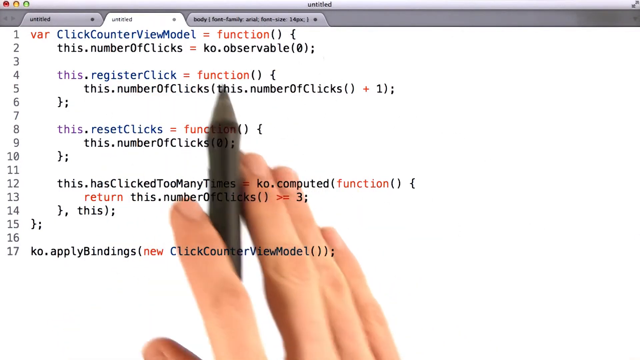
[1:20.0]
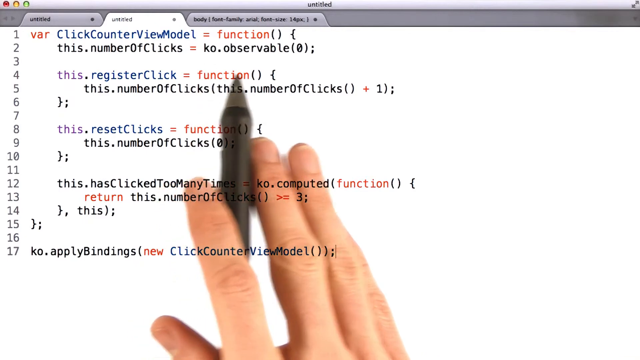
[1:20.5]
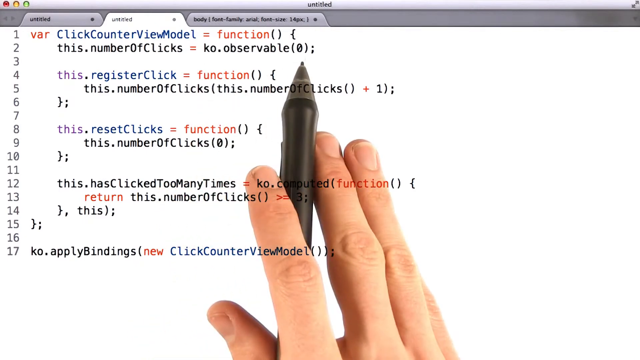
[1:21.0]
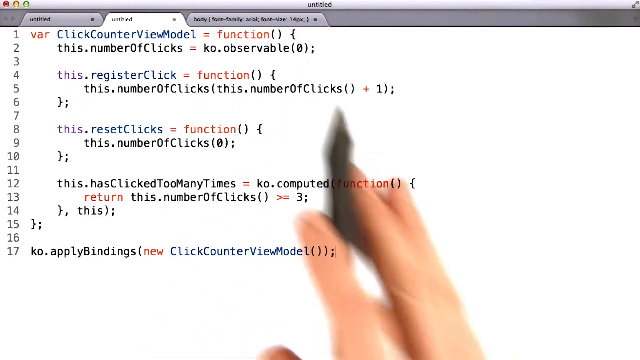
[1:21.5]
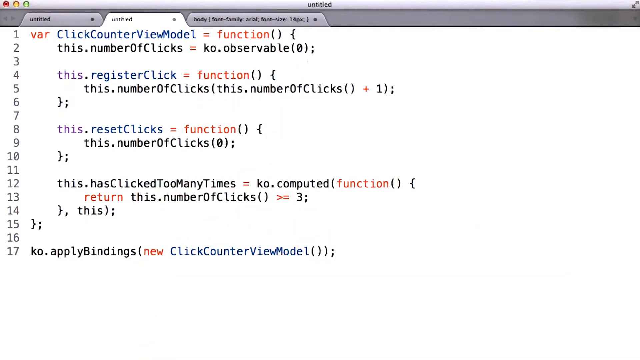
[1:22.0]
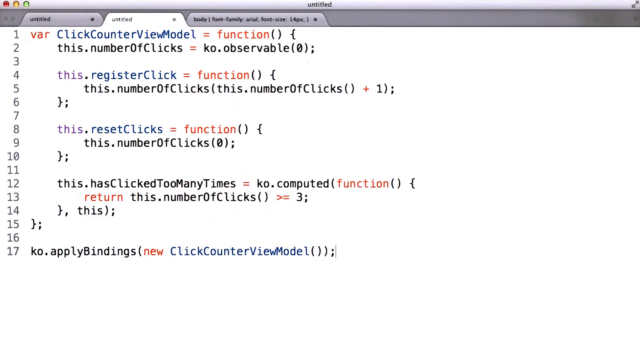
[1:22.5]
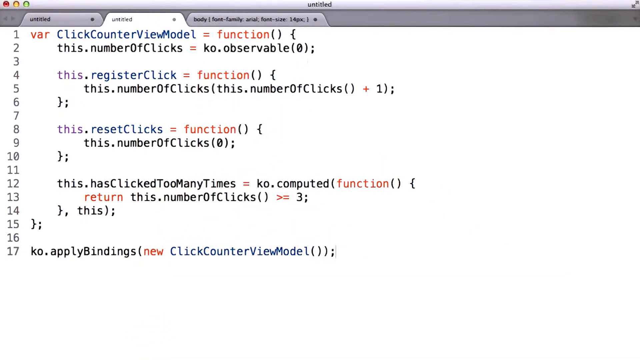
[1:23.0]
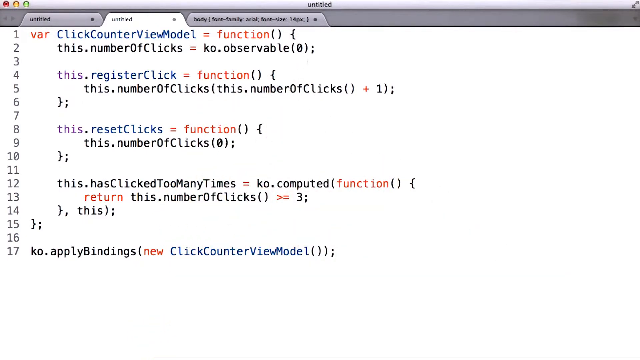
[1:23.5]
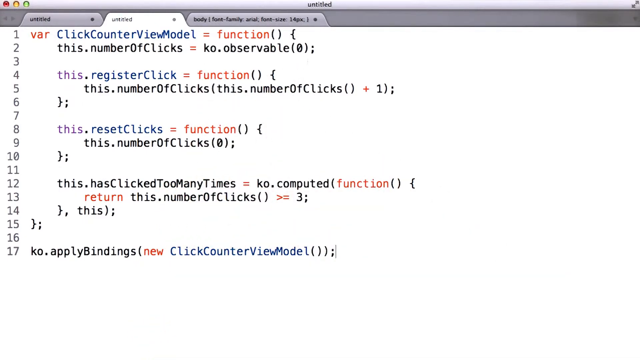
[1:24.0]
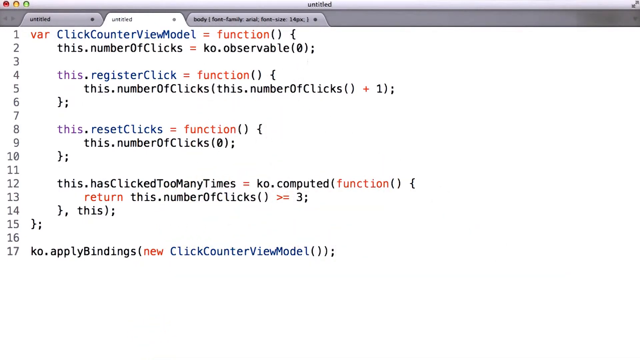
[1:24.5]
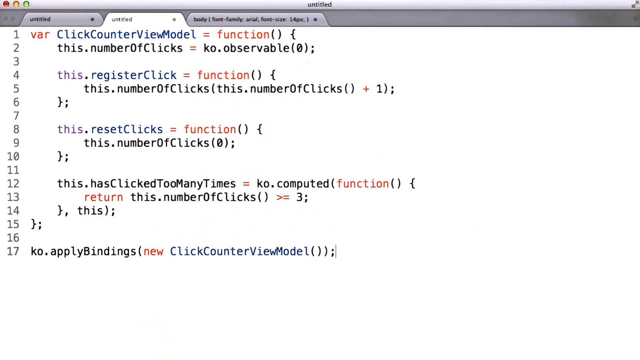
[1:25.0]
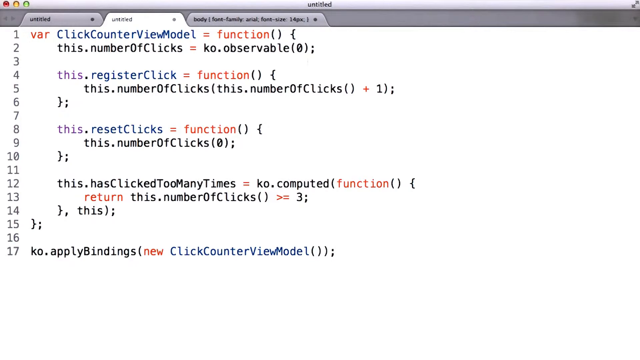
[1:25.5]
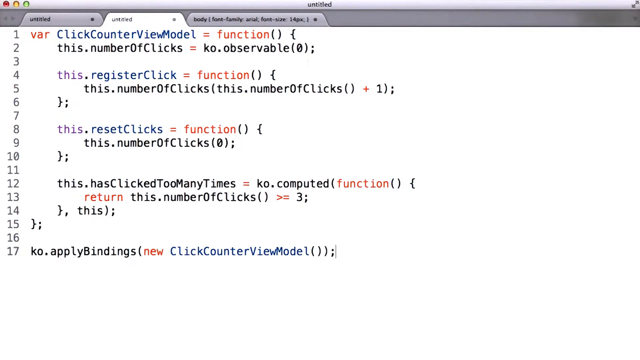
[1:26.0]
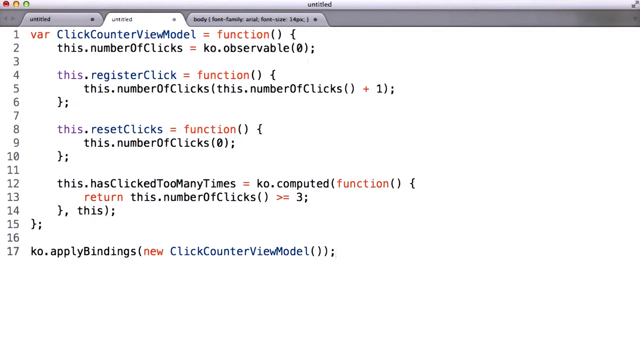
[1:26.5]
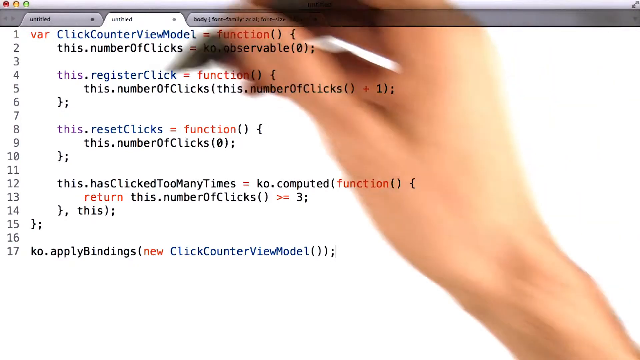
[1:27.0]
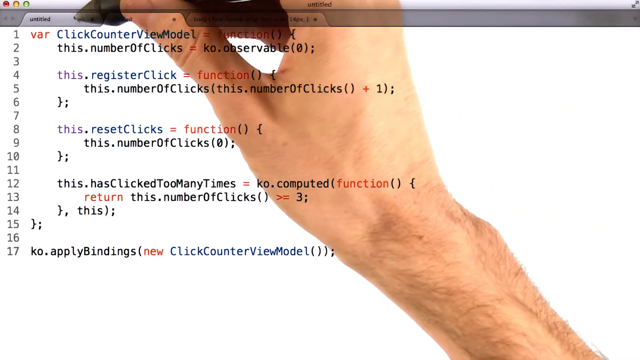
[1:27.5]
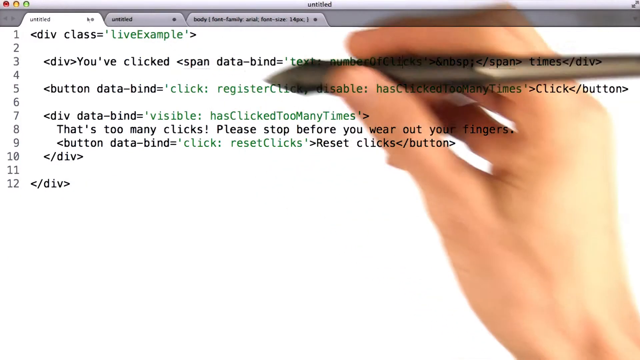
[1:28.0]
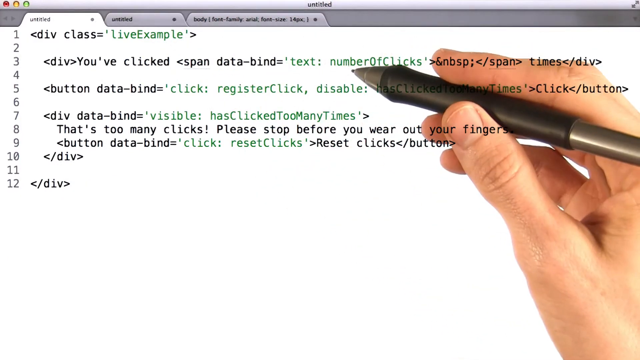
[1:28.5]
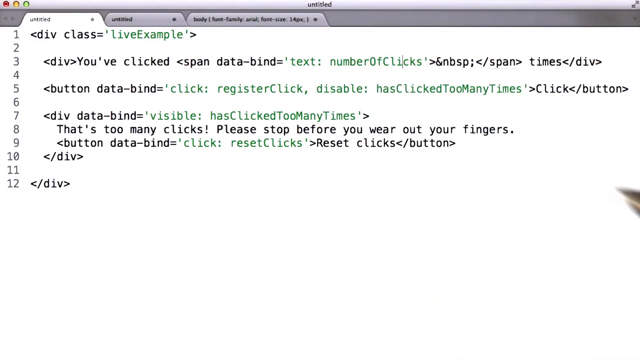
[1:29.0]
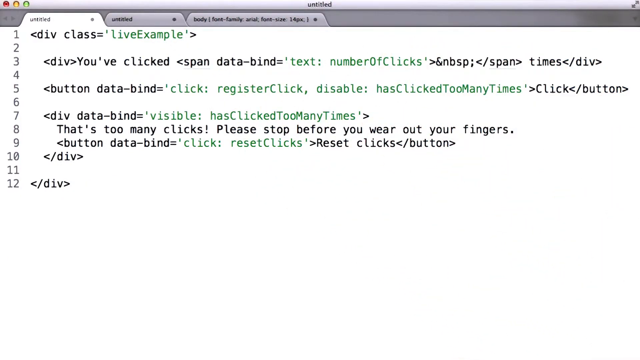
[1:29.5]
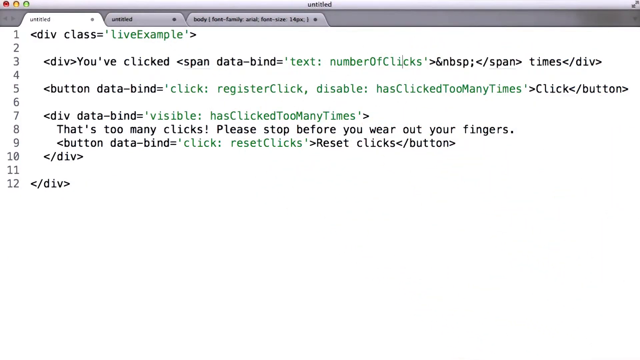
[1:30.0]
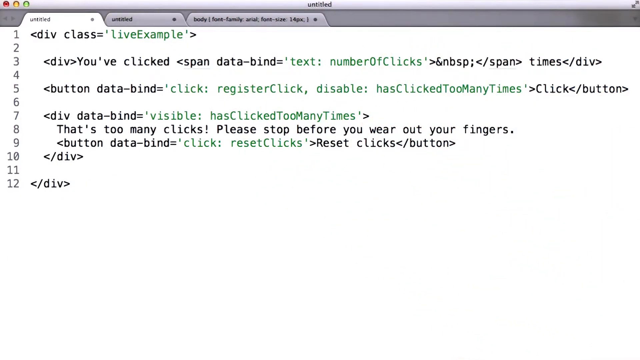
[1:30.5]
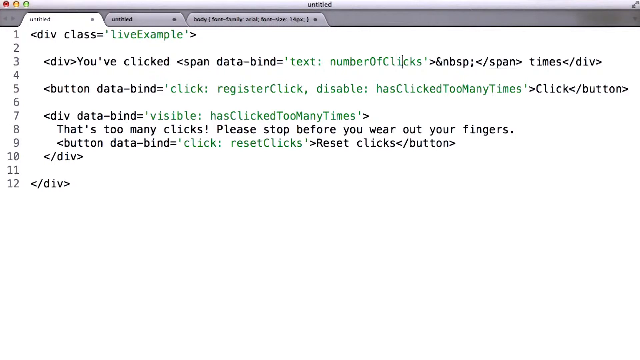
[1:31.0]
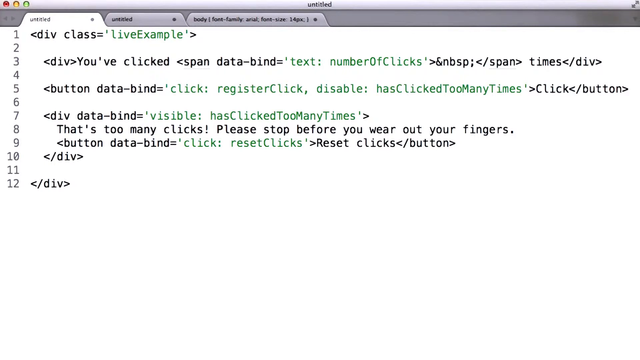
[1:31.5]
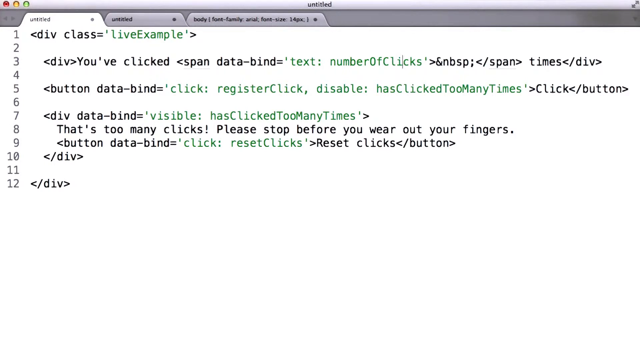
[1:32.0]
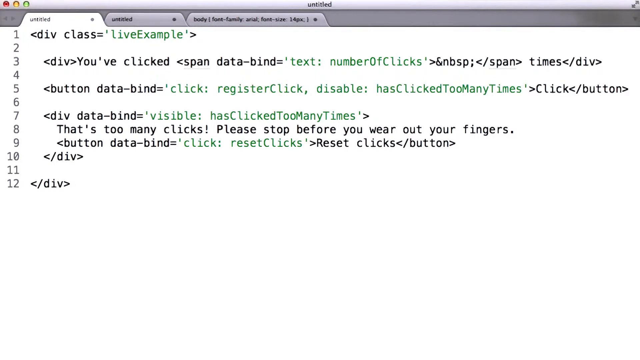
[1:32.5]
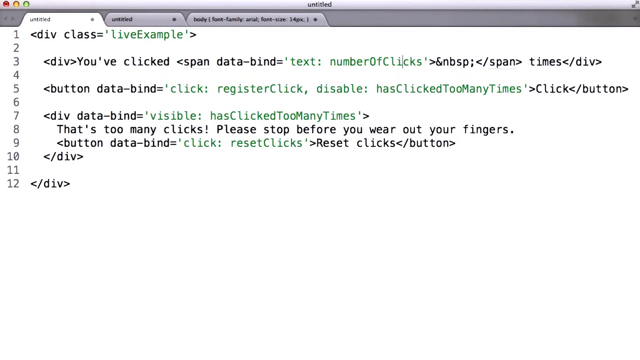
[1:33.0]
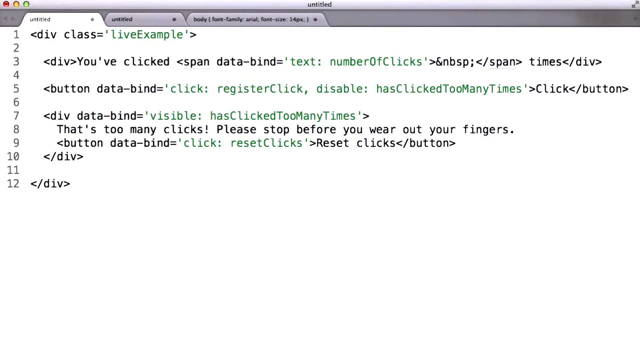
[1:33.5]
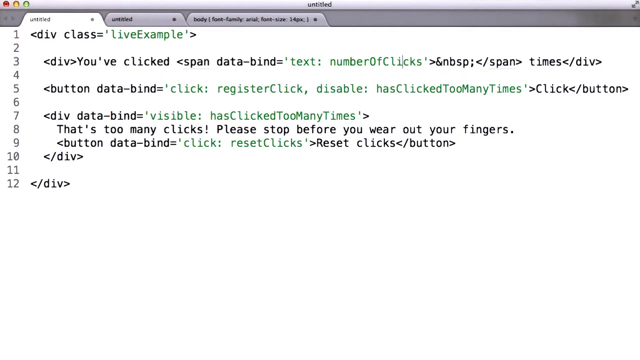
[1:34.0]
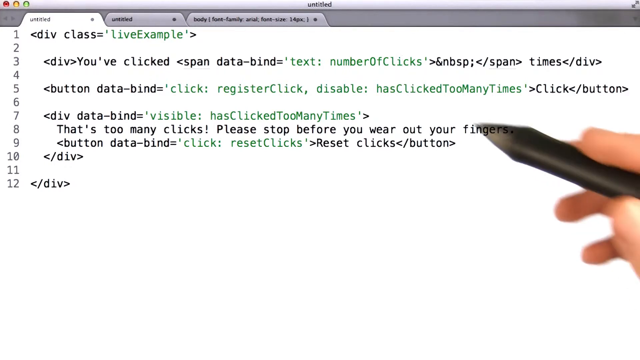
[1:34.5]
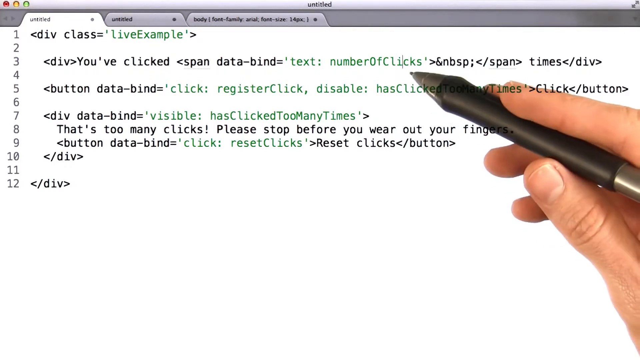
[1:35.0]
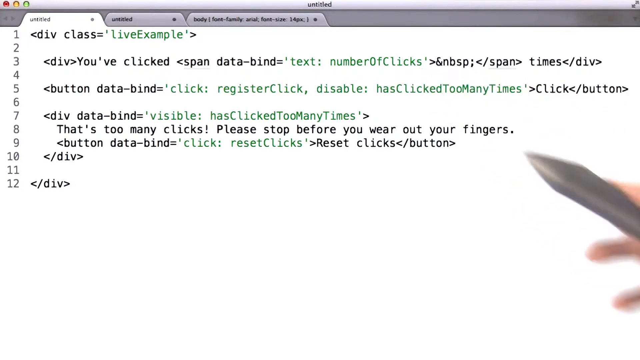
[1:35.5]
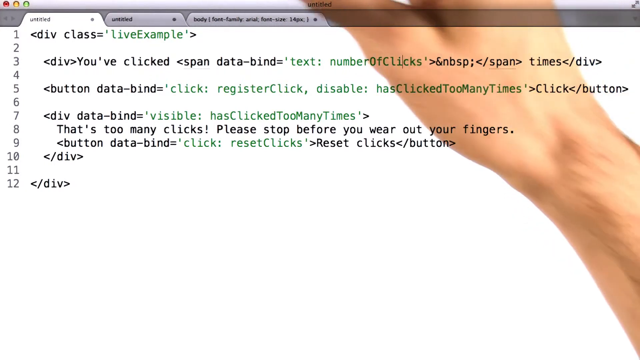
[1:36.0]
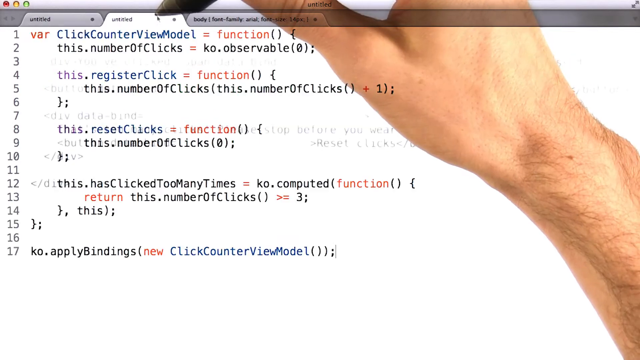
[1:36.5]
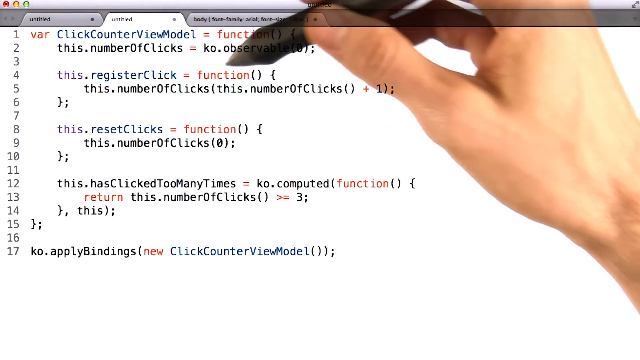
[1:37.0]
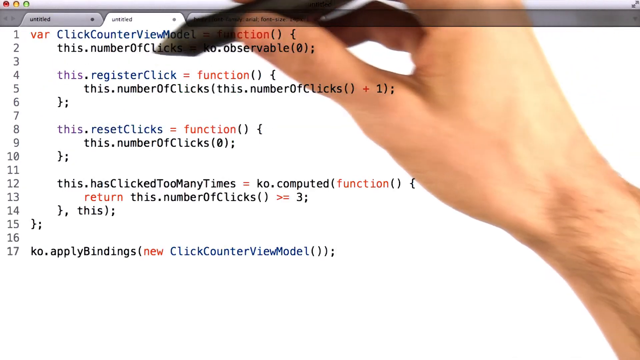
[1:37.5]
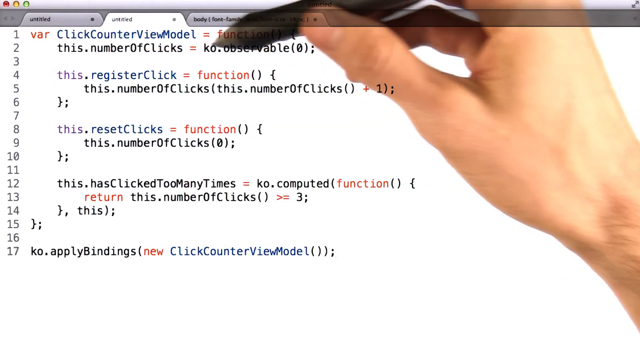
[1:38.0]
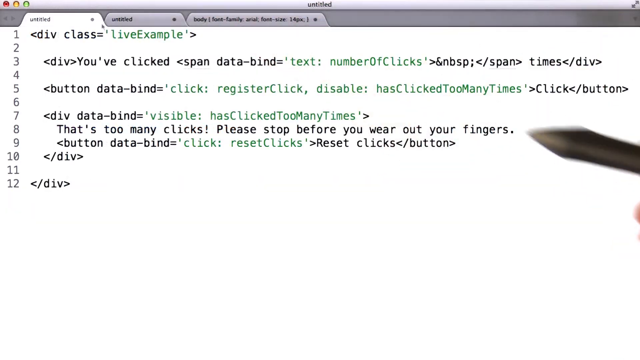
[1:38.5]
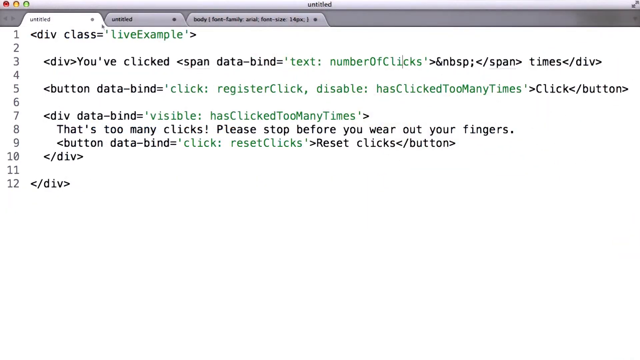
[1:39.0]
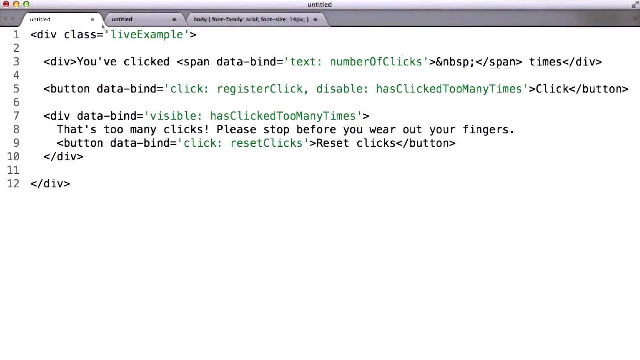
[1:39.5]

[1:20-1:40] The view returns to the live example page showing "number of clicks", then moves to another page showing the function code that drives the main page. Text includes "number of clicks", "has clicked too many times", "observable", "register click", "disable", "Reset clicks" button, "click counter view model" and "reset clicks".